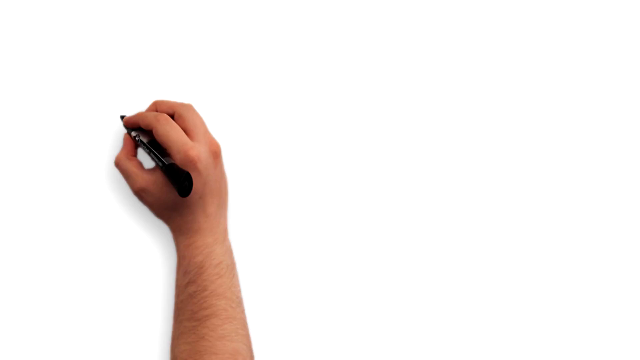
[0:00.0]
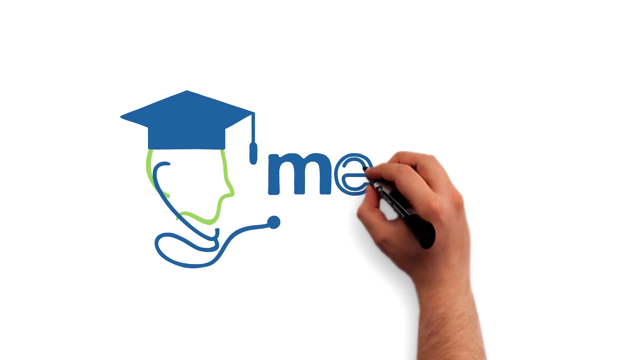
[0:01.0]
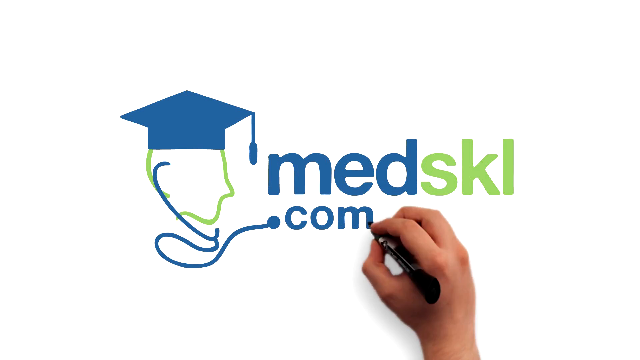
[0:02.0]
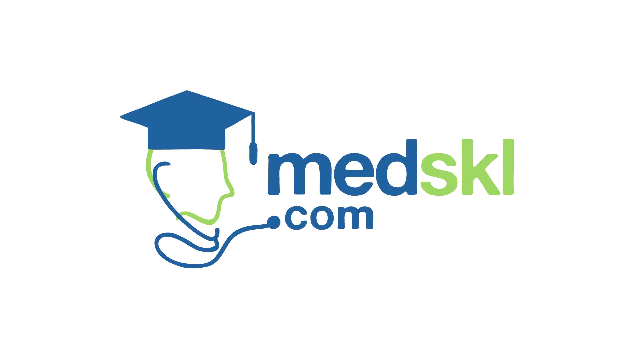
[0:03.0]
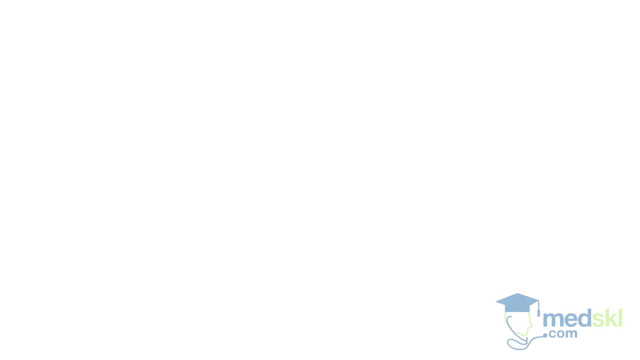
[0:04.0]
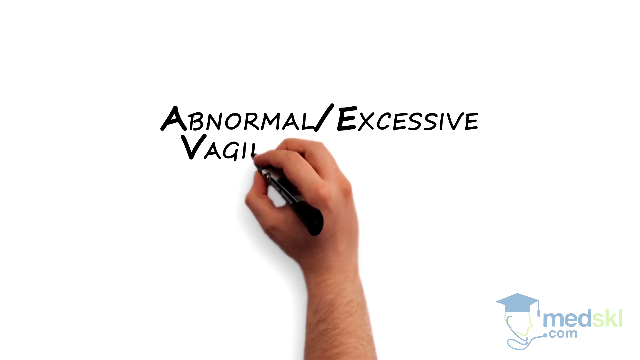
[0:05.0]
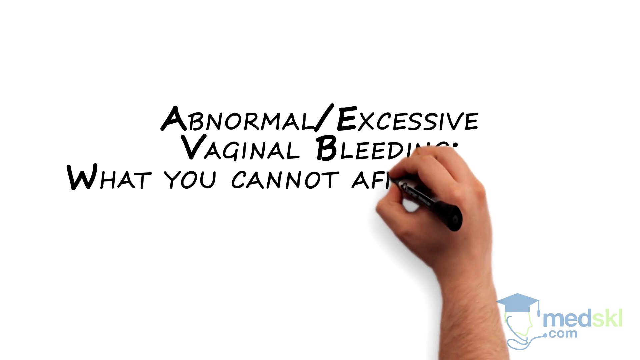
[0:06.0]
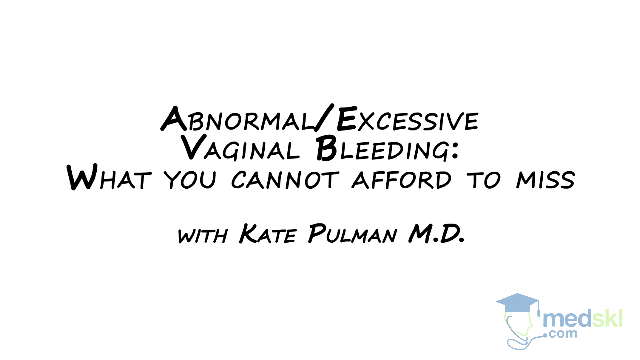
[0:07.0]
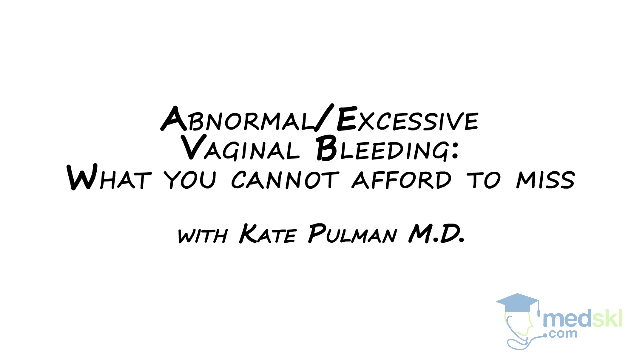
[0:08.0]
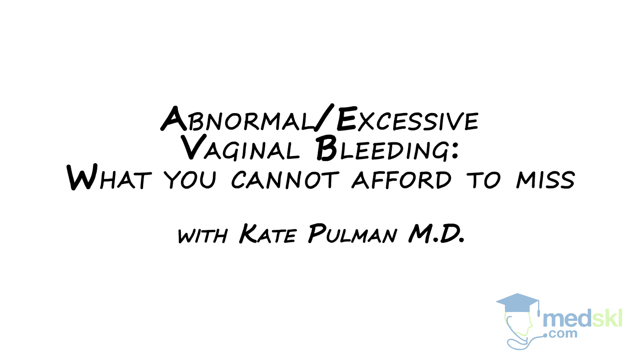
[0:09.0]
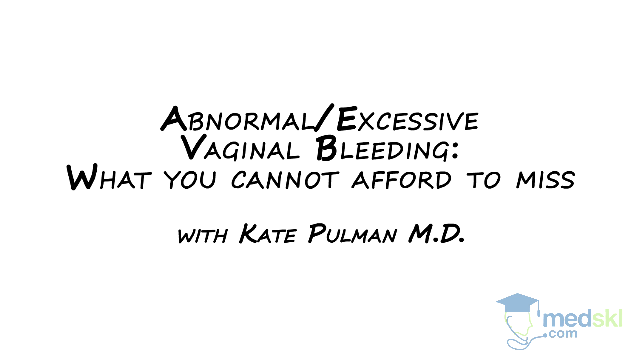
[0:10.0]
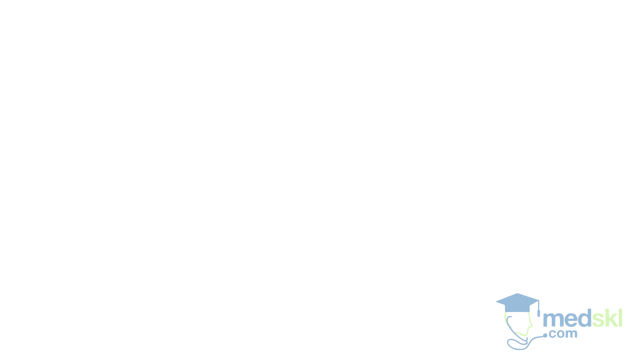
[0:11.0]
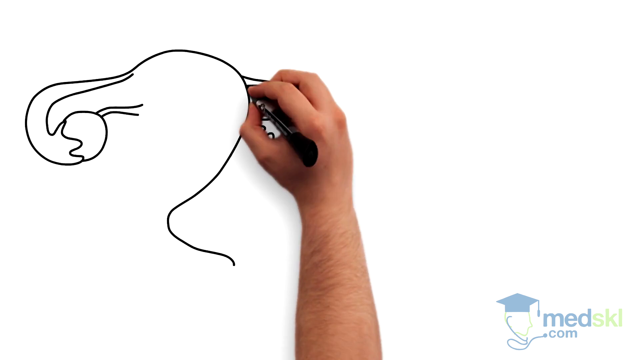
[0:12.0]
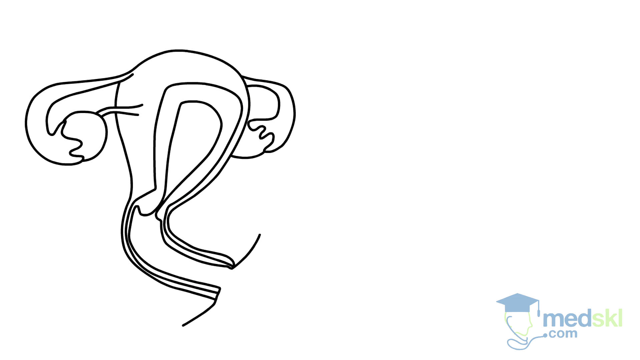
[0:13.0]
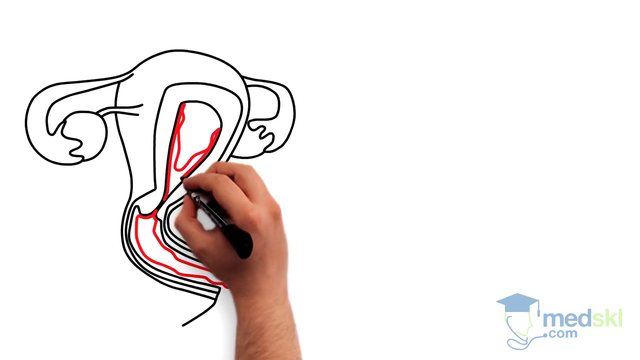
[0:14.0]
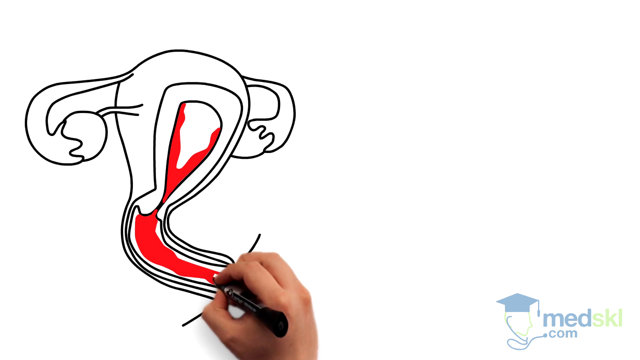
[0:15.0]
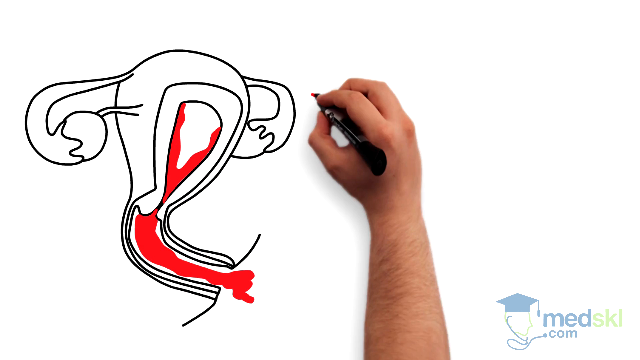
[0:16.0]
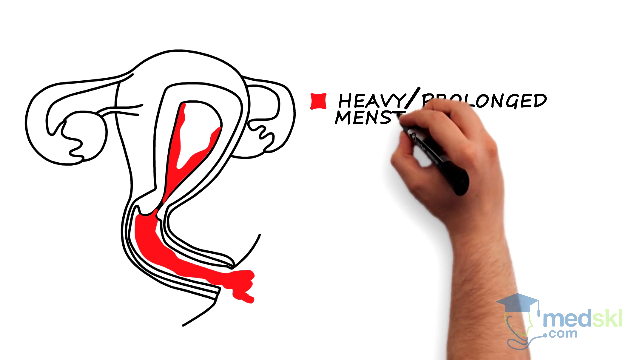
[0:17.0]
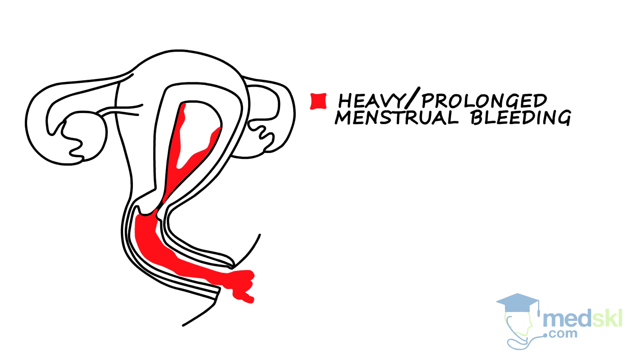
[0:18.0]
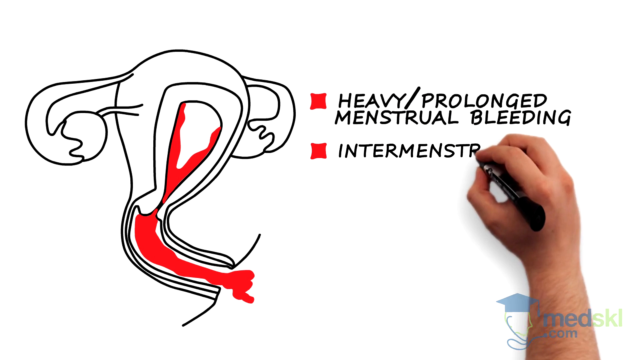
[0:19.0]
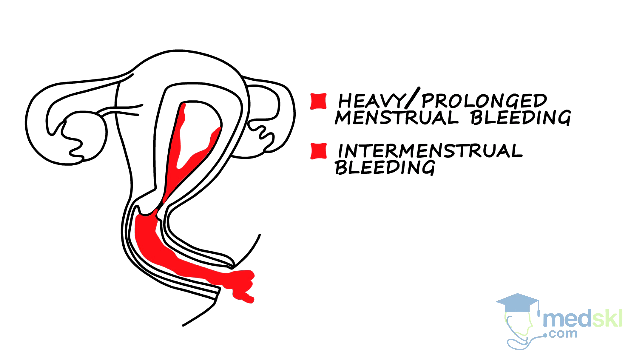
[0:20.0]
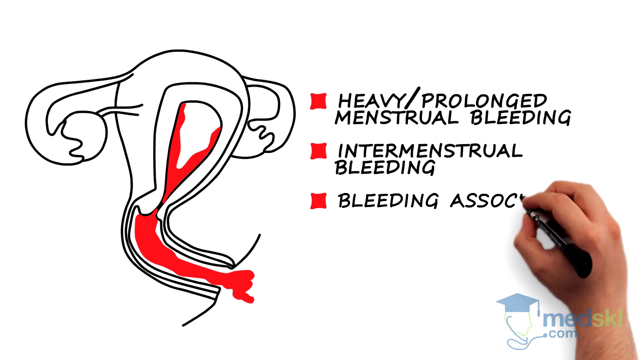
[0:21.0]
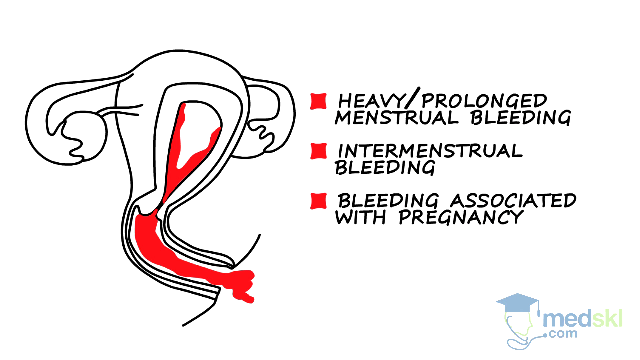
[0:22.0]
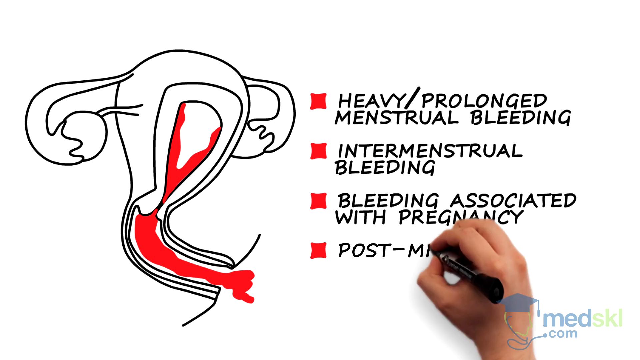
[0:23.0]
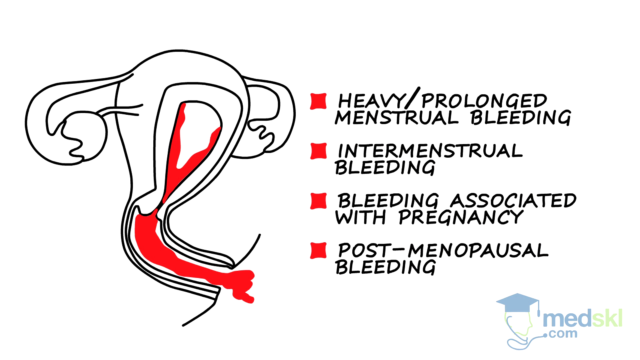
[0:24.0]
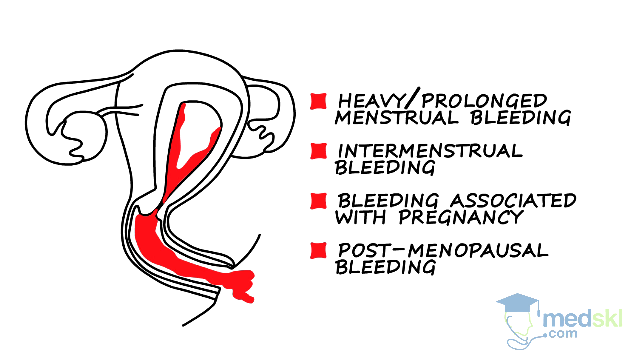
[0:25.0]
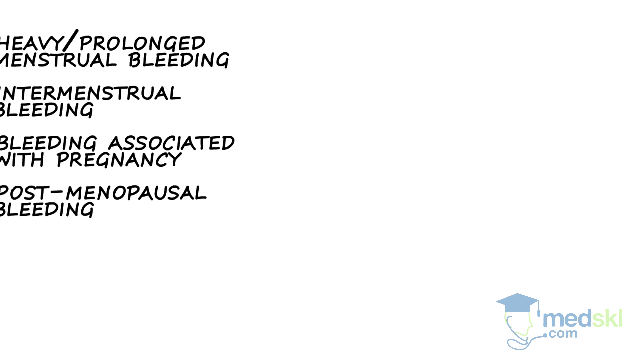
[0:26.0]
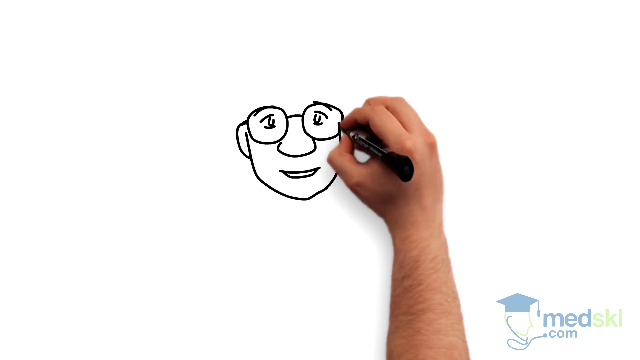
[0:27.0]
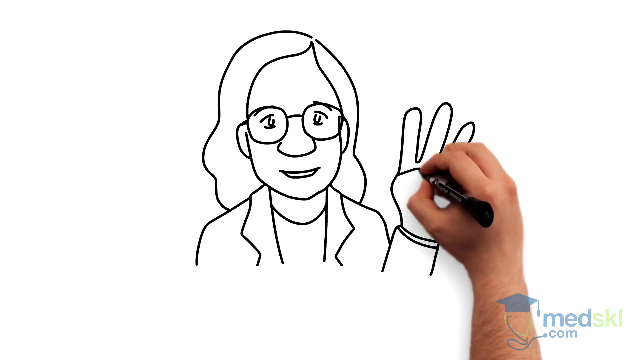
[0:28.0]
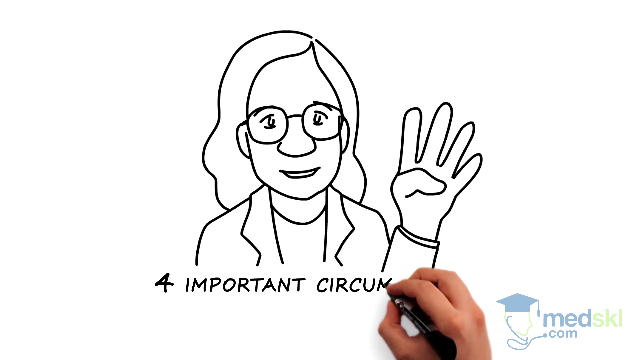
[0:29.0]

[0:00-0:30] In a whiteboard animation, a hand draws out the logo of a website called medskl.com against an all-white background. The MedSkl.com logo then moves away to the bottom right corner, and the hand writes in black marker in the center: "Abnormal excessive vaginal bleeding. What you cannot afford to miss. With Kate Pulman, M.D." These captions disappear upward, and the hand draws a picture of a female's uterus, coloring its center part red to indicate blood or bleeding. The hand then writes a bullet-point list of what look like symptoms: first "heavy prolonged menstrual bleeding," second "intermenstrual bleeding," third "bleeding associated with pregnancy," and fourth "postmenopausal bleeding." The view shifts to the right onto a blank white screen, where the hand draws a woman wearing glasses with her left hand up and four fingers raised. Below the picture of the woman, the hand writes out four important circumstances that you cannot afford to miss.